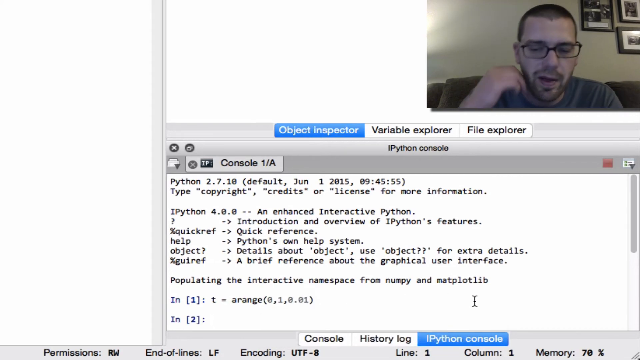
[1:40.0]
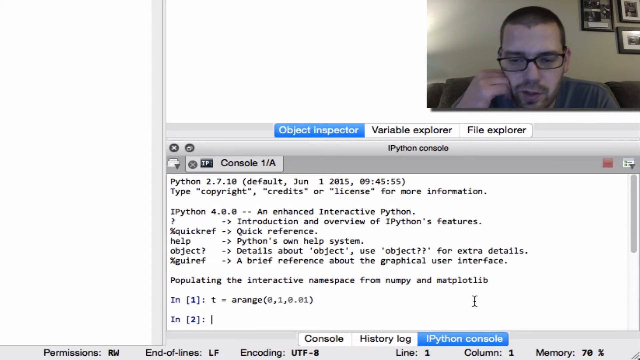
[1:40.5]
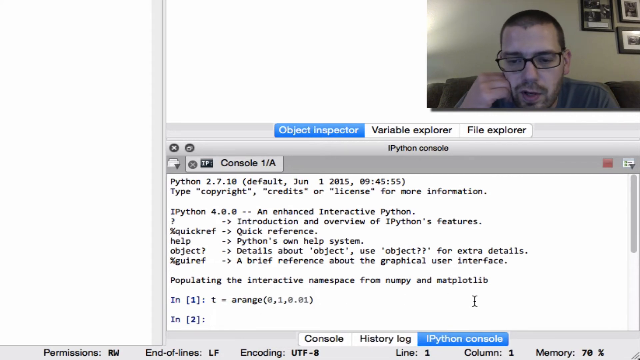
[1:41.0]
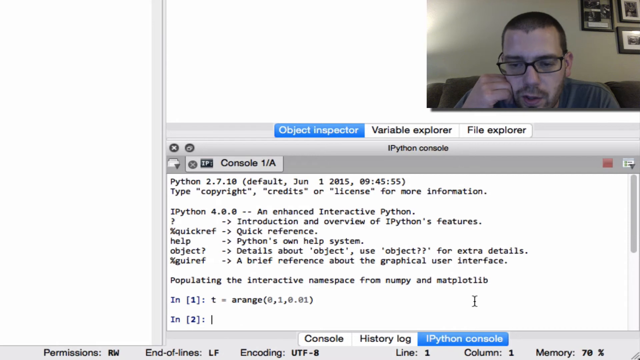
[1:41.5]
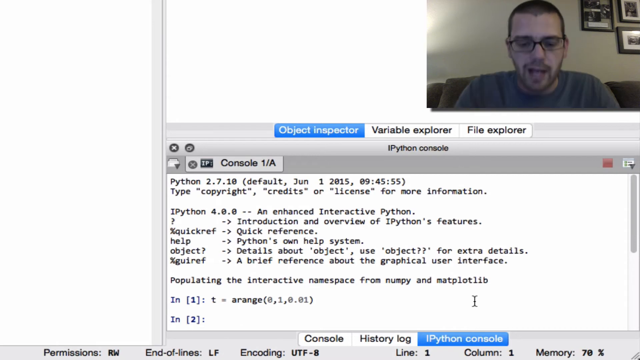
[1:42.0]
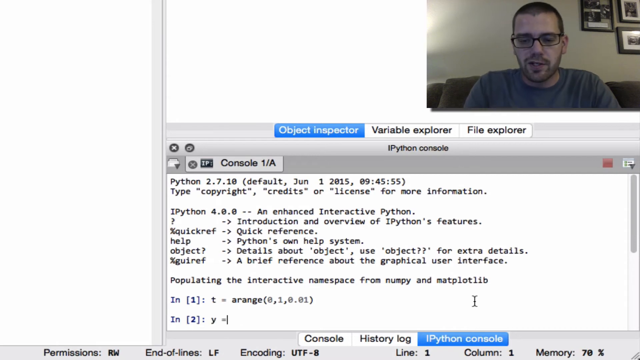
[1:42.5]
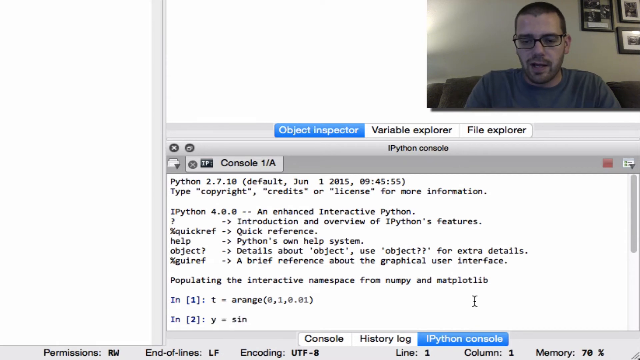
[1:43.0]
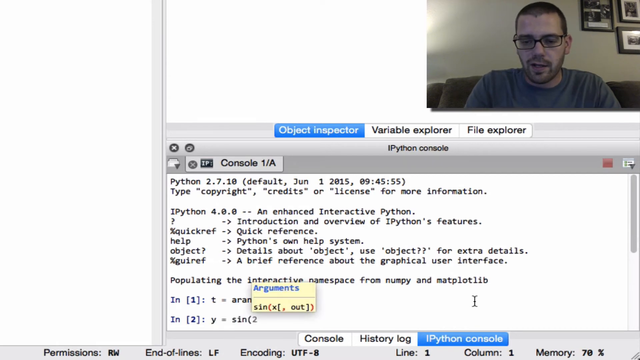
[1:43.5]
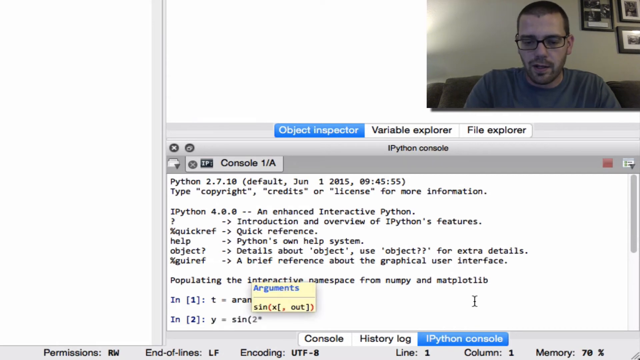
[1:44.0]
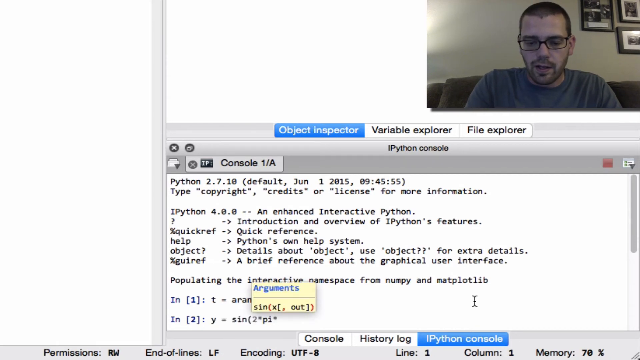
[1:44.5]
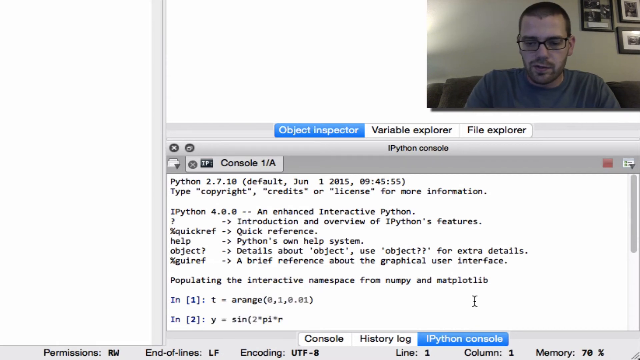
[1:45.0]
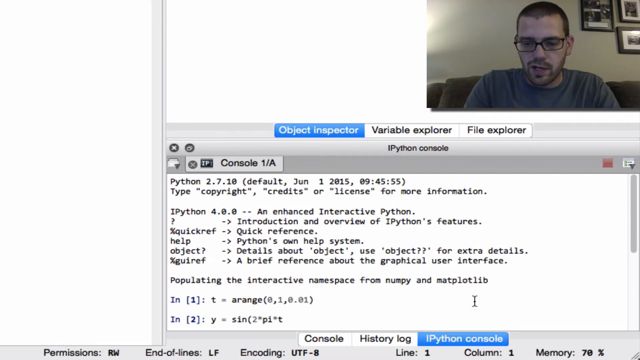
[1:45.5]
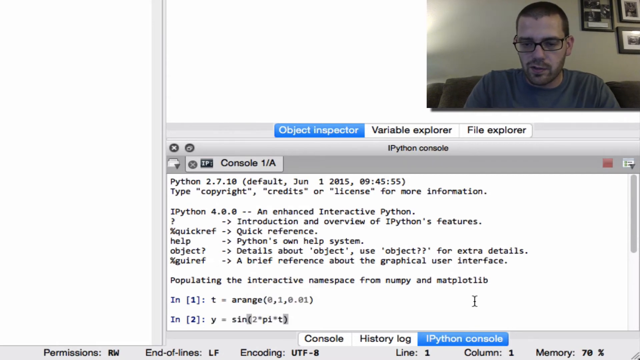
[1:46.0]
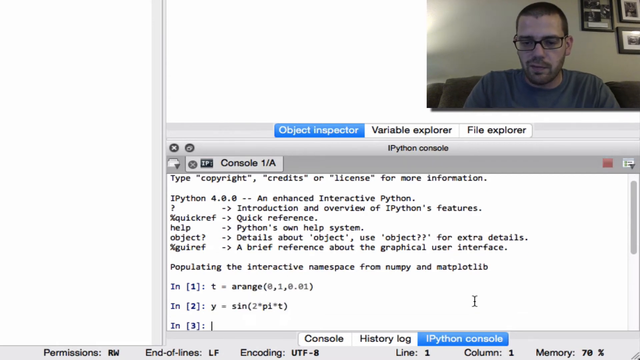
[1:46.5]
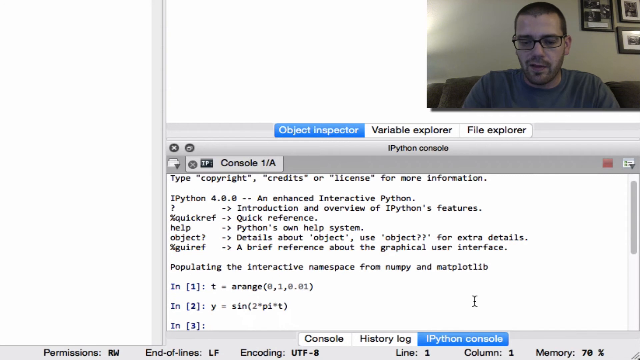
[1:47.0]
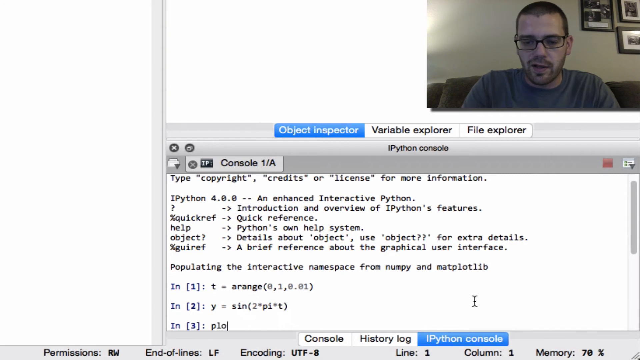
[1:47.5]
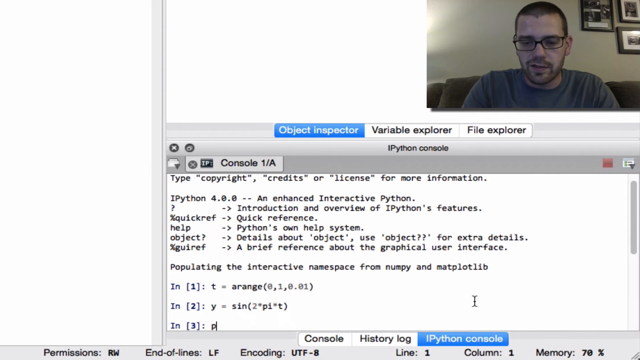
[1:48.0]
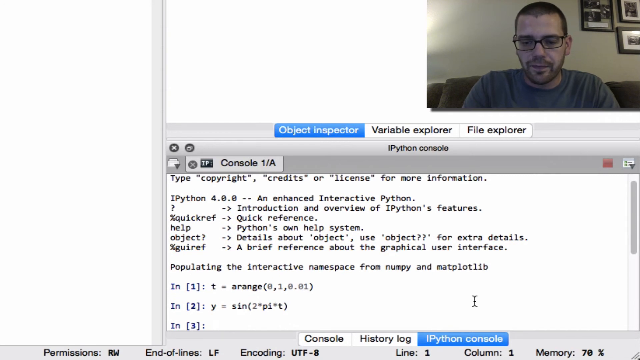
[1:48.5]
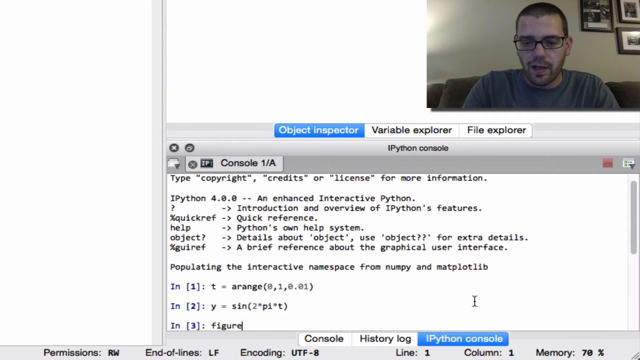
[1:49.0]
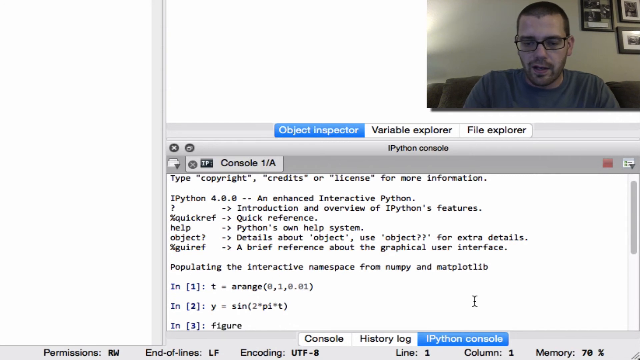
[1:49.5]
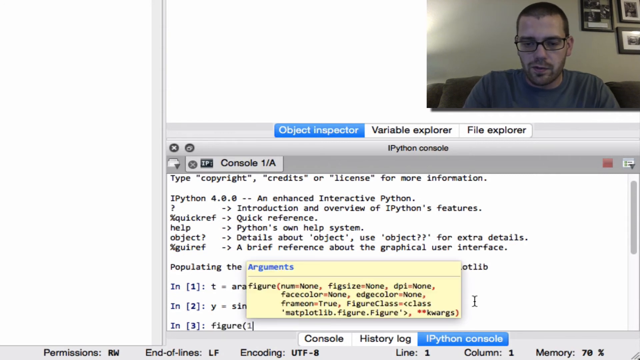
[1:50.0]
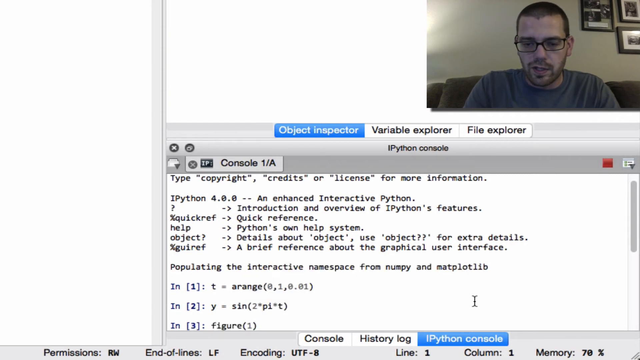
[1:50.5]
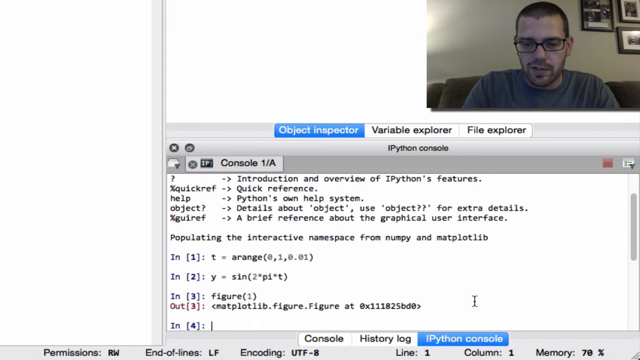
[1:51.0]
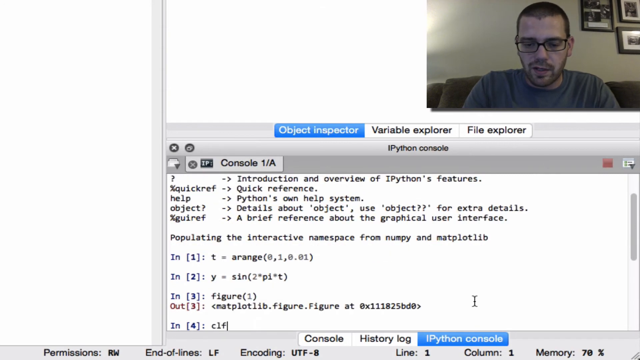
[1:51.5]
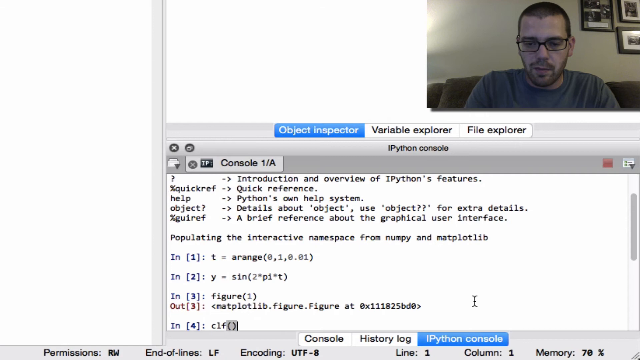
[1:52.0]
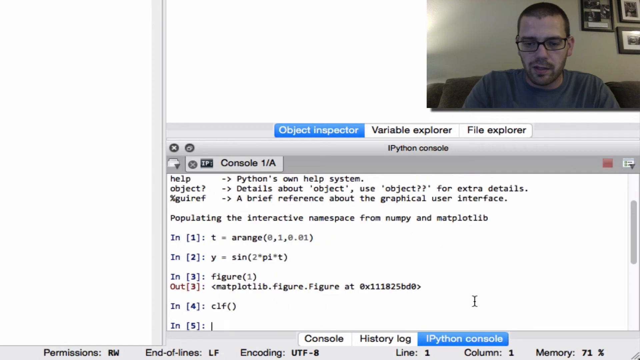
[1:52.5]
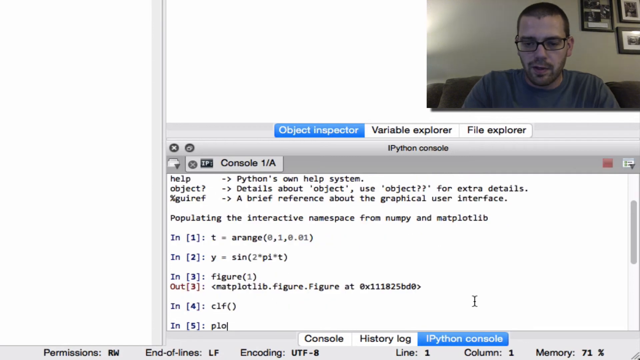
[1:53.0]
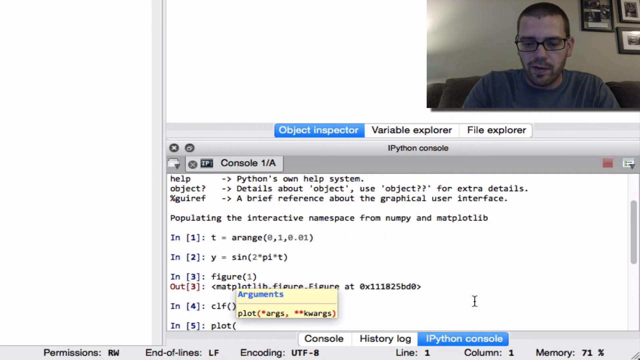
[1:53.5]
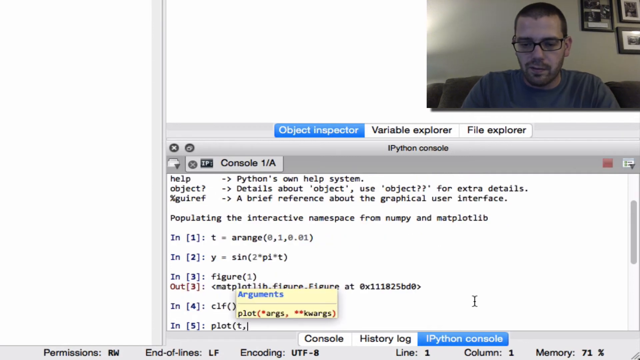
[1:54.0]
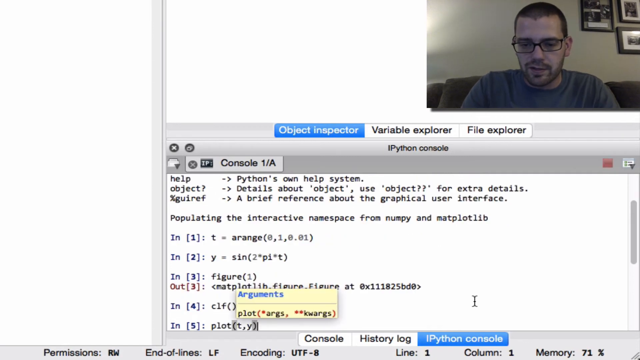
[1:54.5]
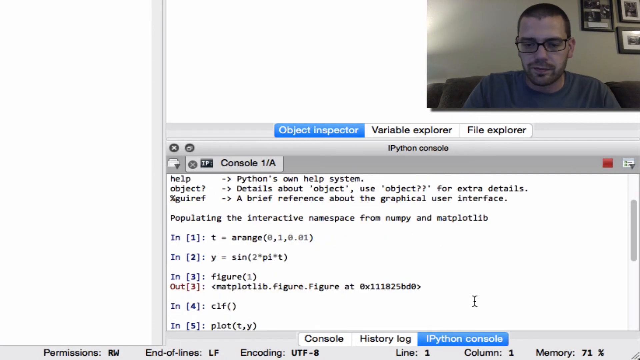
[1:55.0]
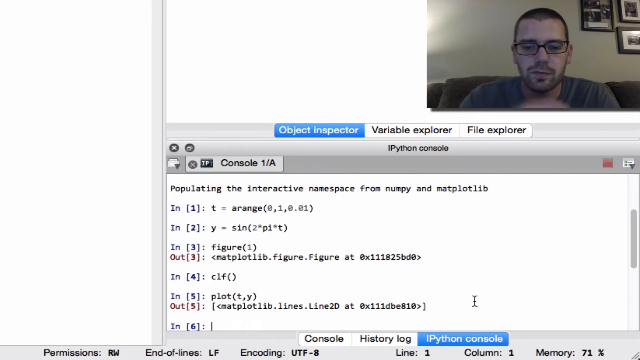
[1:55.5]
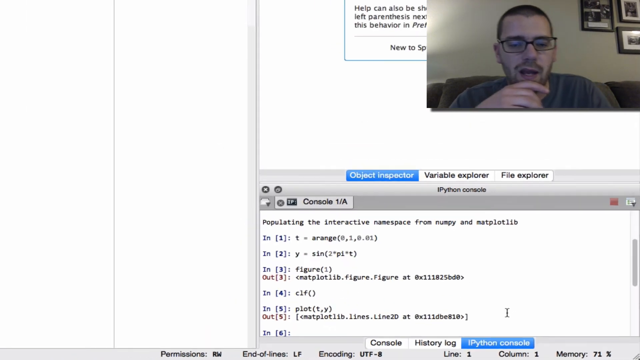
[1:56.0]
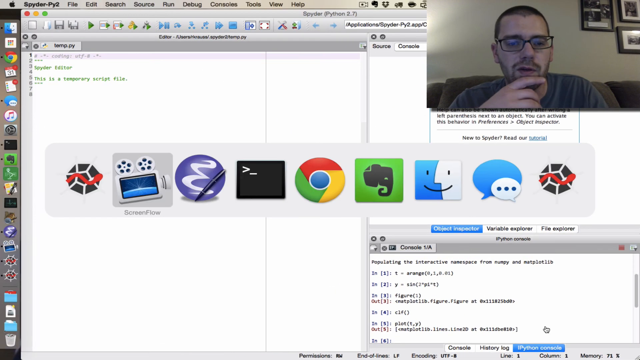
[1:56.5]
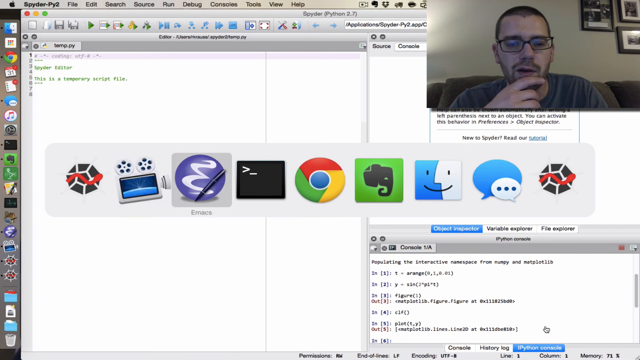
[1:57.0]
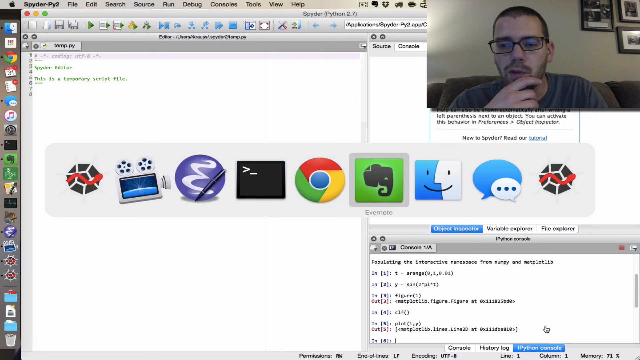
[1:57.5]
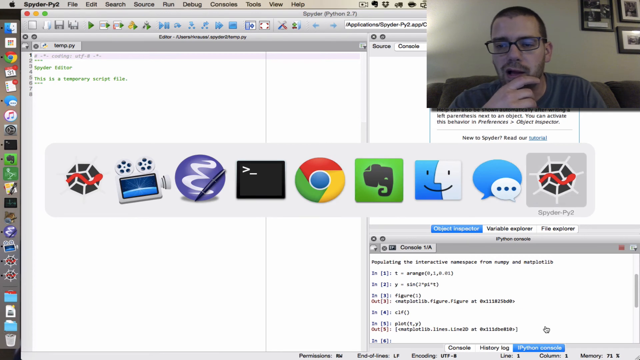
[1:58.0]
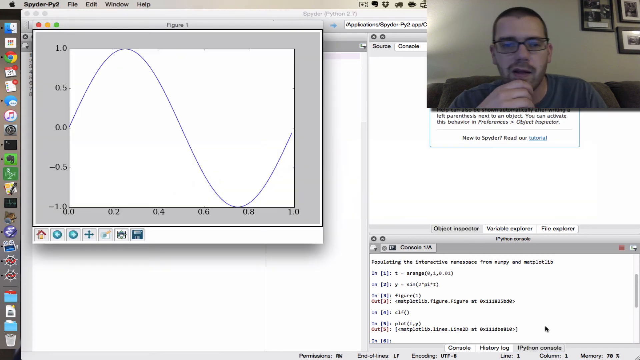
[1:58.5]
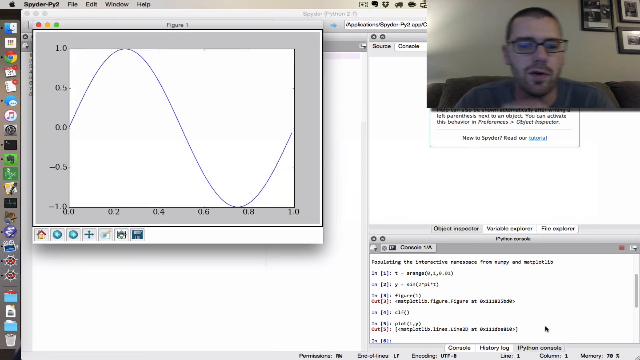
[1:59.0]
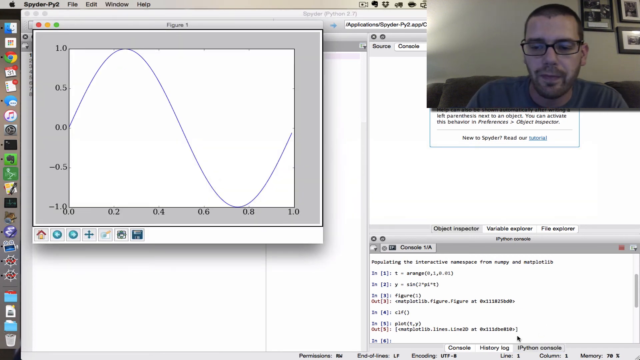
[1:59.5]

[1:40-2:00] He scratches his cheek and then leans his head against his hand as he talks, seemingly thinking about what to type. The second entry looks like "y = sin". As he types, a yellow argument pop-up box with a few different things appears. He enters sin with a parenthesis, multiplying by pi. Then he has entry 3 in brackets with a figure, and a yellow pop-up briefly appears as he types it. He goes on to entries 4 and 5, adding different things. He zooms out and scrolls left and right through apps, including a different Spyder, a cinema app, an E and a few others. He then clicks on what is apparently Spyder, and a graph pops up that looks almost like a tangent, with a wavy blue wave or crest on a y and x axis. The bottom axis goes from 0.0 to 1, and the left axis goes from negative 1 up to positive 1; the curve starts up and goes back down.